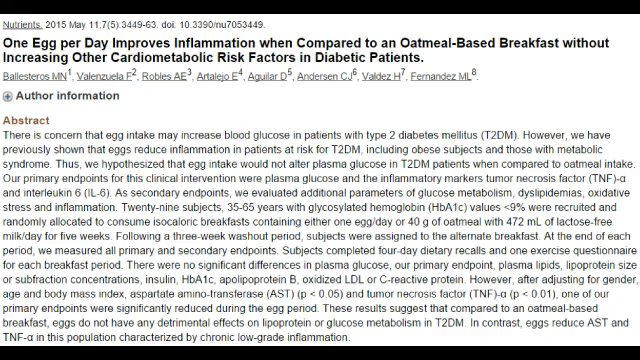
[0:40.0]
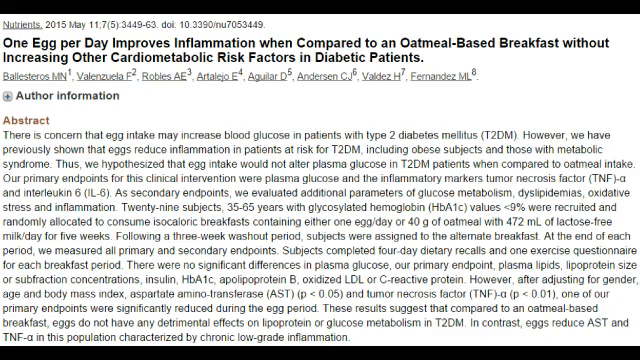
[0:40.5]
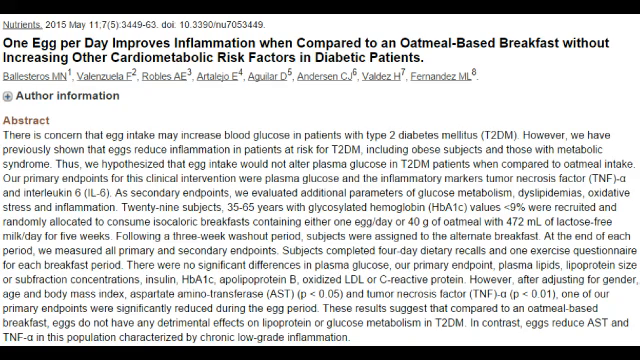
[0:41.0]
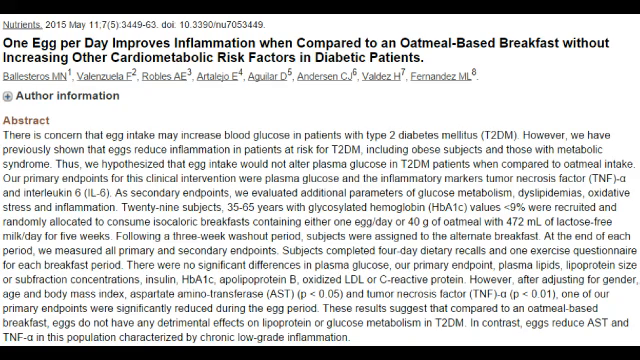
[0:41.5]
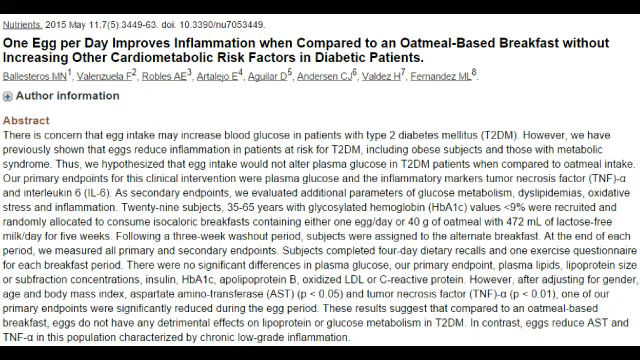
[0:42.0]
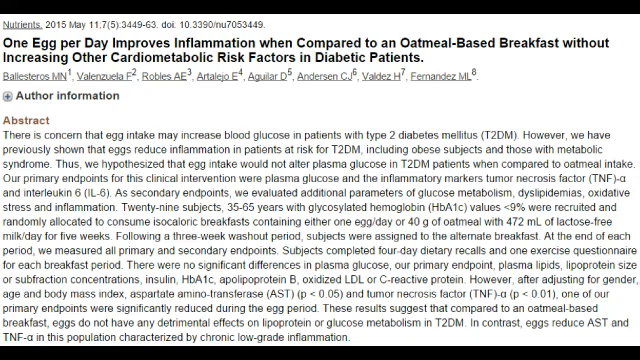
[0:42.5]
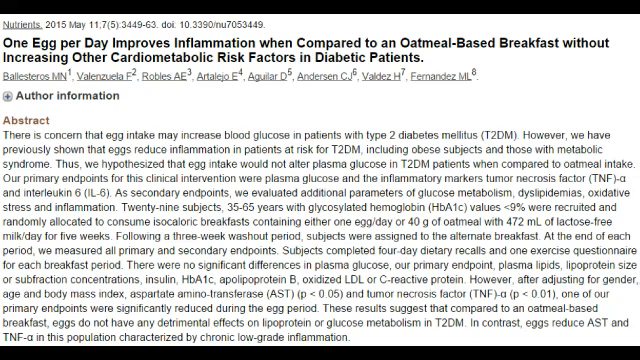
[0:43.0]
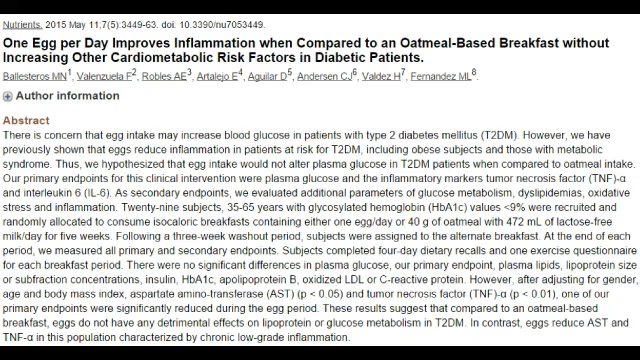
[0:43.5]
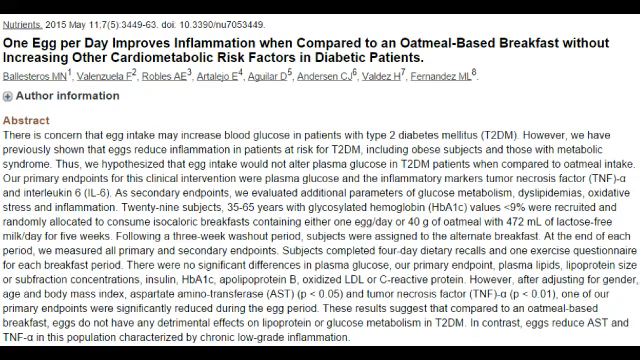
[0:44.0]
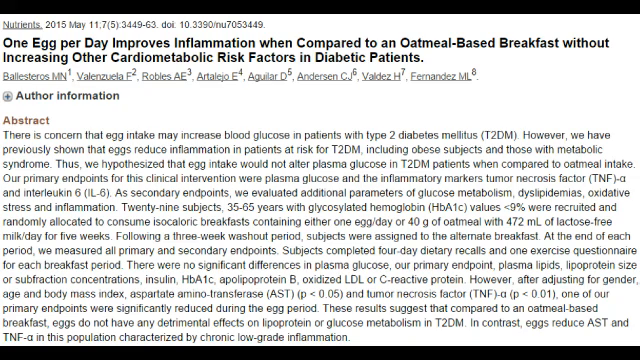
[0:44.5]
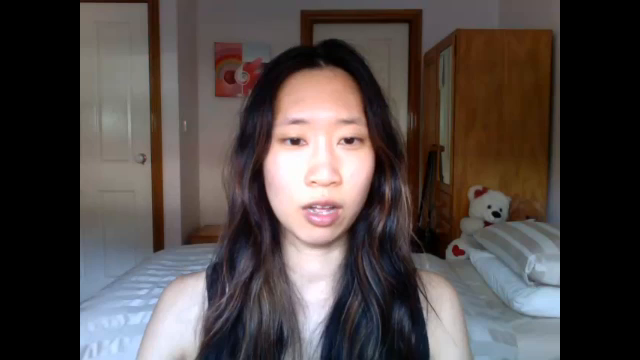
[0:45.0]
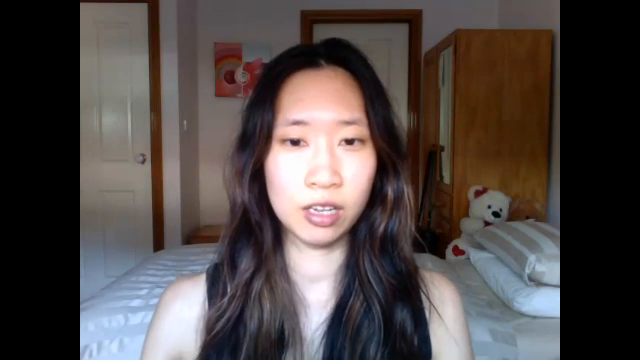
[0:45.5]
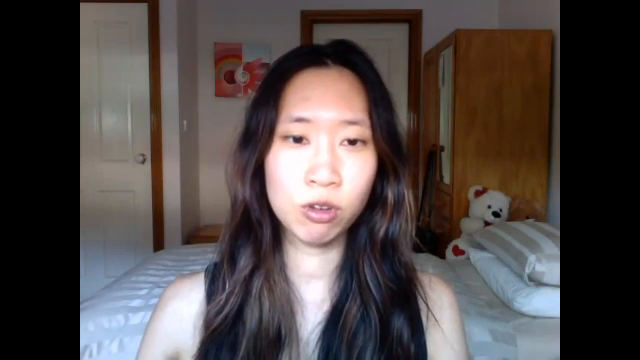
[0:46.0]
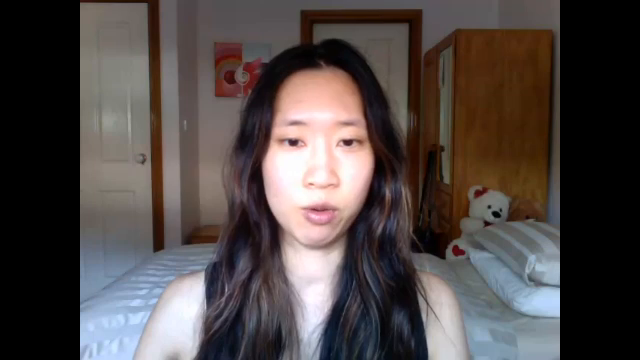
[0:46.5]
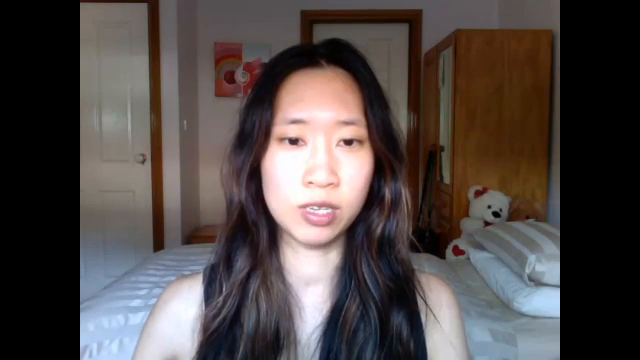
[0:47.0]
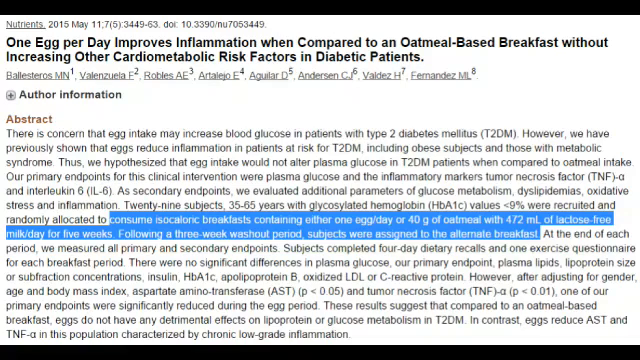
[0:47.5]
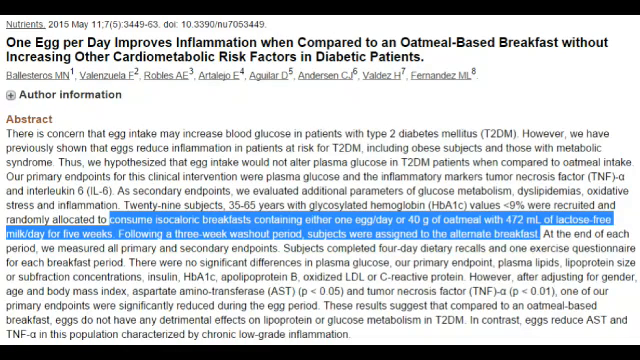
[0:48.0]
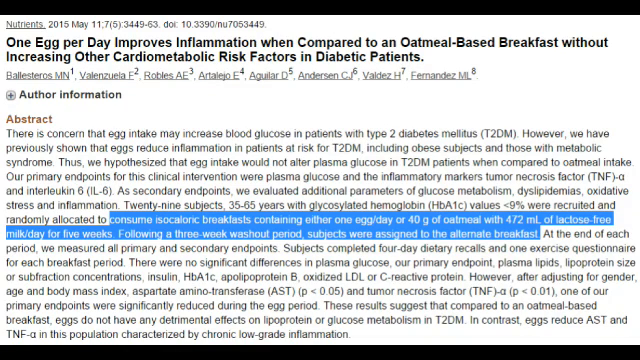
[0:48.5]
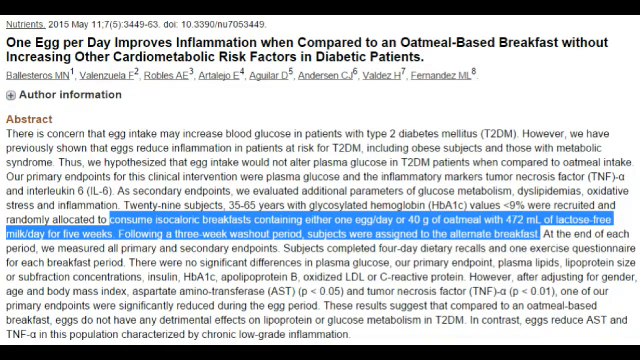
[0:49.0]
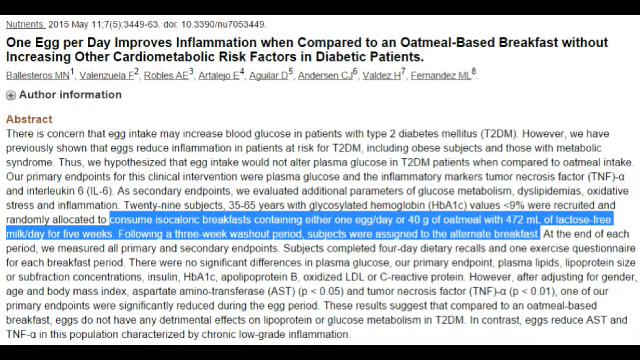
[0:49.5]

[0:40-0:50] The title card appears again. The woman's eyes are focused on the camera, as if making eye contact with the viewer, and she has straight white teeth. An image of the article is shown again, seemingly still on the abstract. A highlighted part of the article then appears, reading "29 subjects, 35 to 65 years with glyphosylated hemoglobin HbA1c values less than 9% were recruited and randomly allocated to consume isocaloric breakfasts containing either one egg per day or 40 grams of oatmeal with 472 milliliters of lactose-free milk".